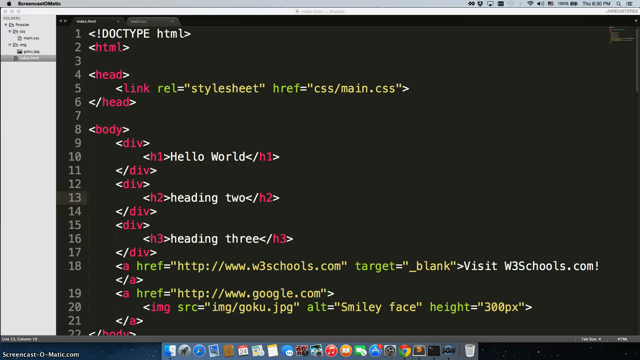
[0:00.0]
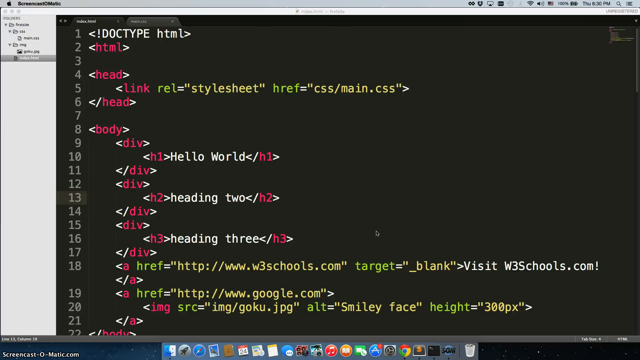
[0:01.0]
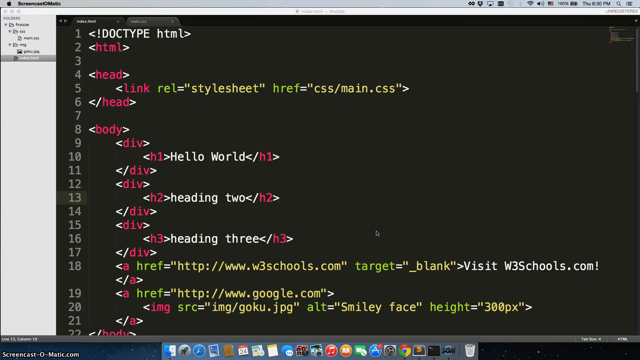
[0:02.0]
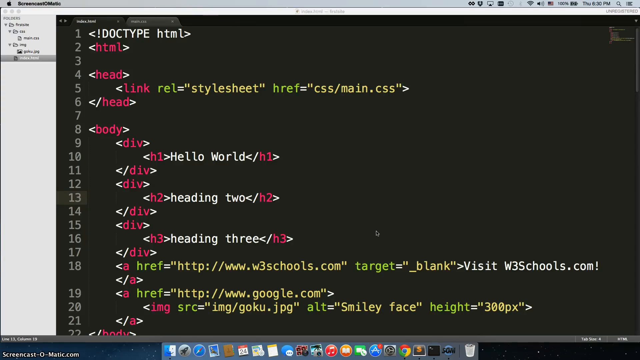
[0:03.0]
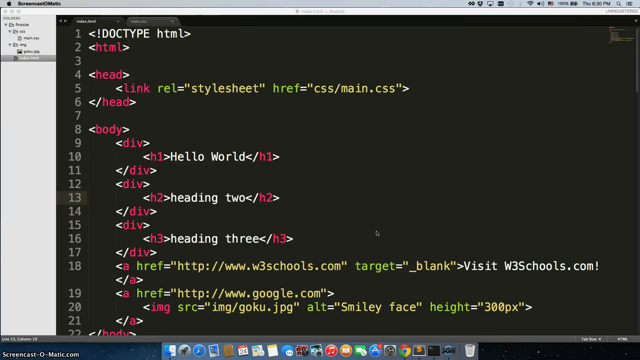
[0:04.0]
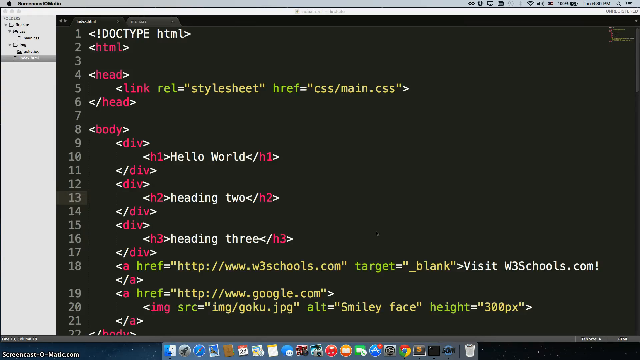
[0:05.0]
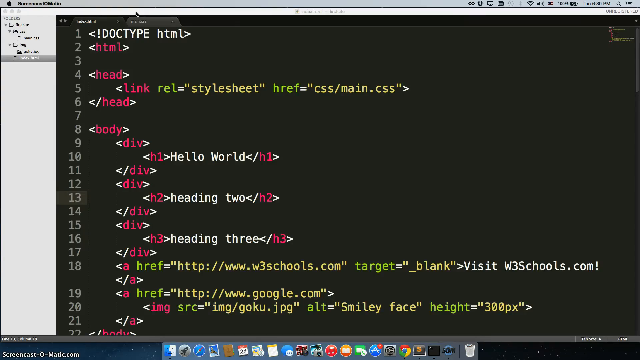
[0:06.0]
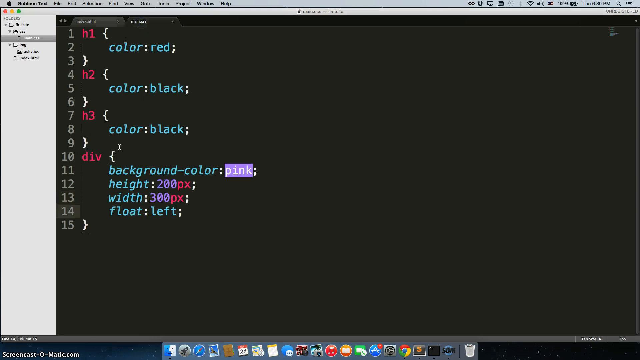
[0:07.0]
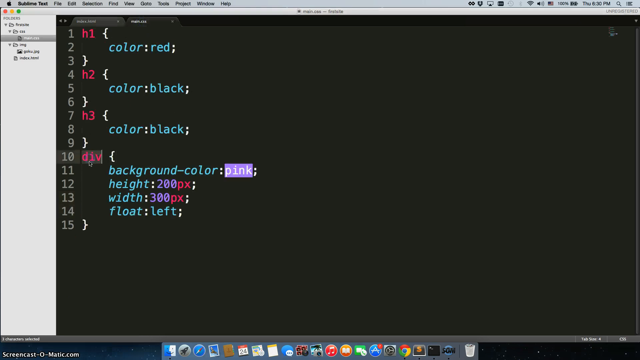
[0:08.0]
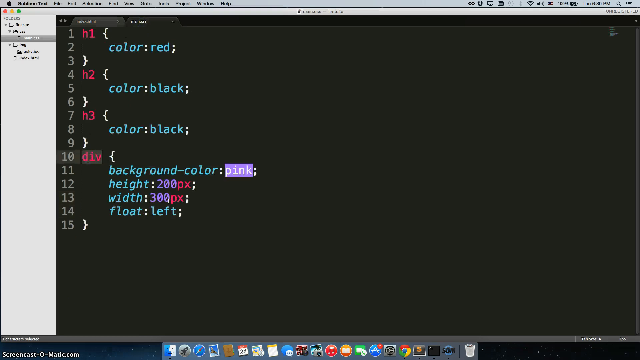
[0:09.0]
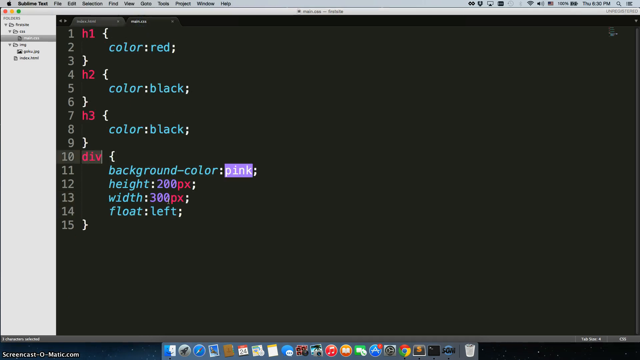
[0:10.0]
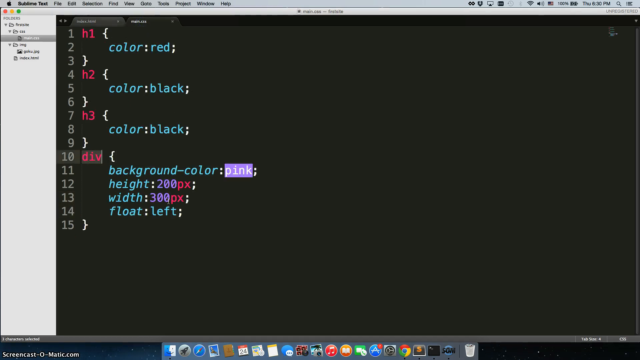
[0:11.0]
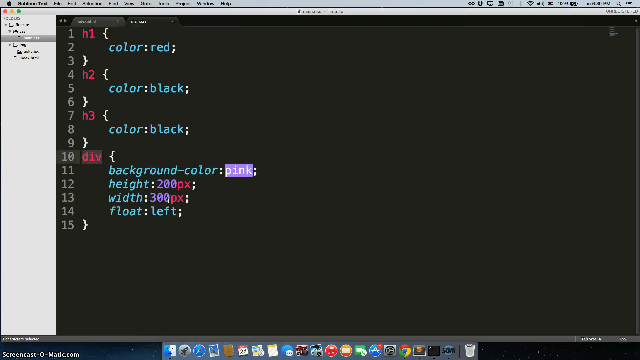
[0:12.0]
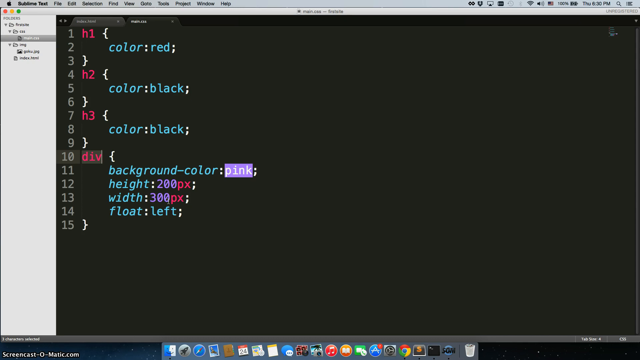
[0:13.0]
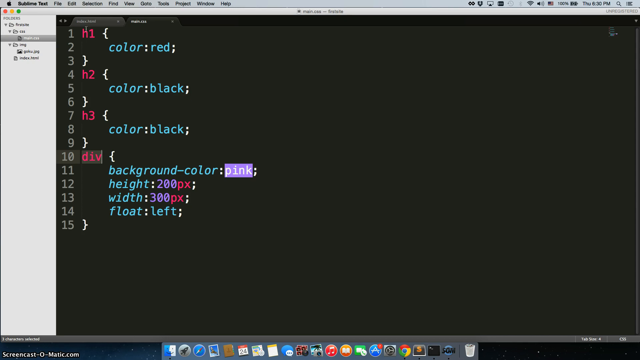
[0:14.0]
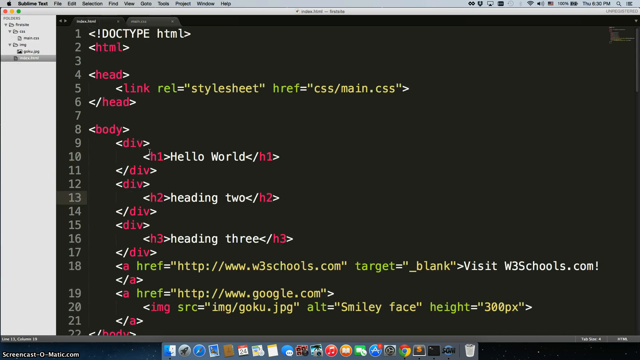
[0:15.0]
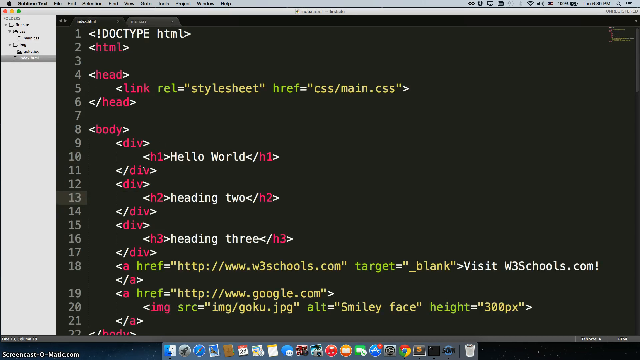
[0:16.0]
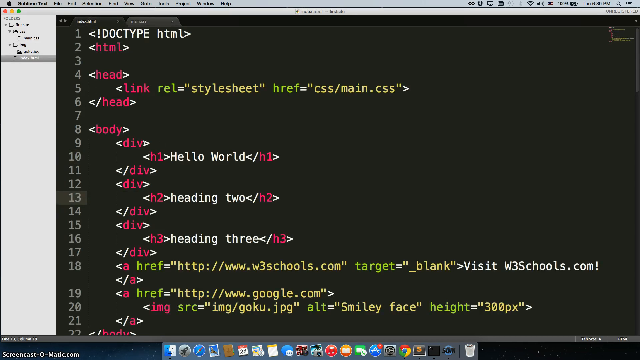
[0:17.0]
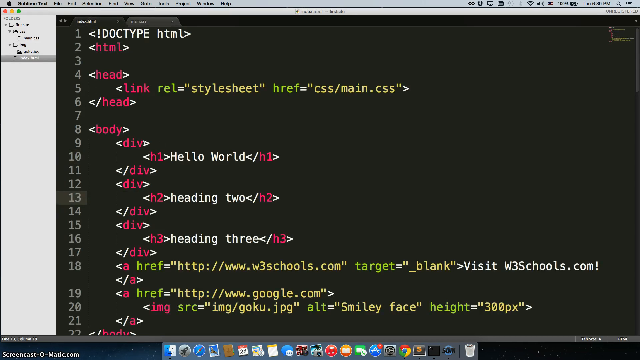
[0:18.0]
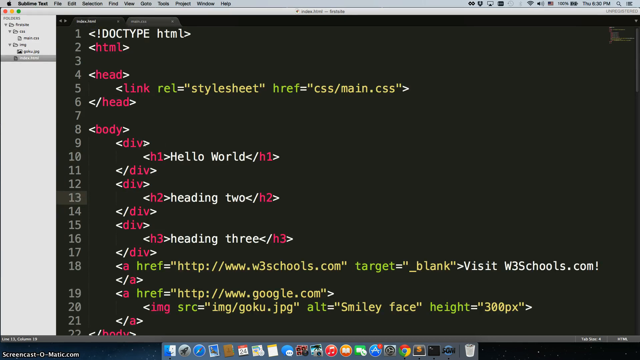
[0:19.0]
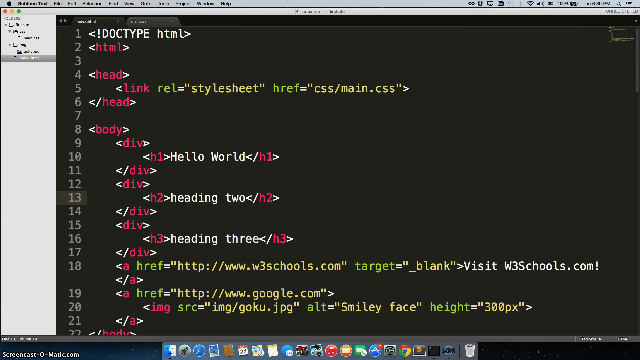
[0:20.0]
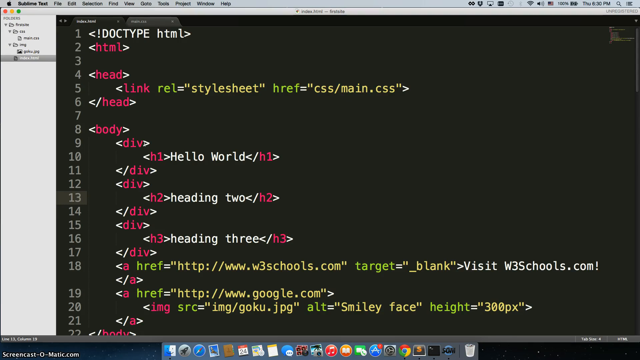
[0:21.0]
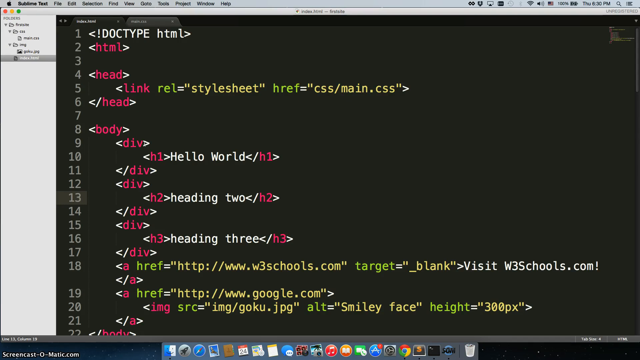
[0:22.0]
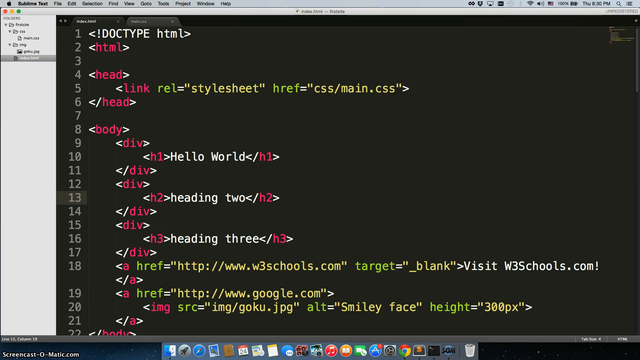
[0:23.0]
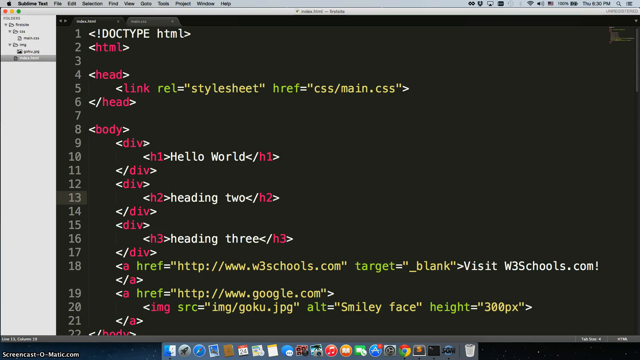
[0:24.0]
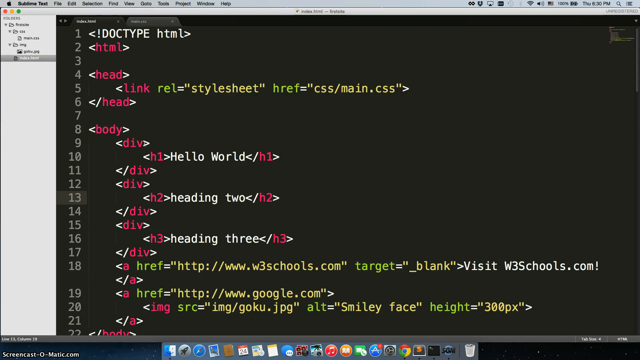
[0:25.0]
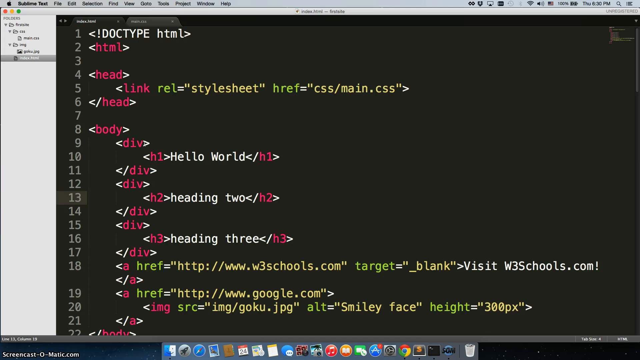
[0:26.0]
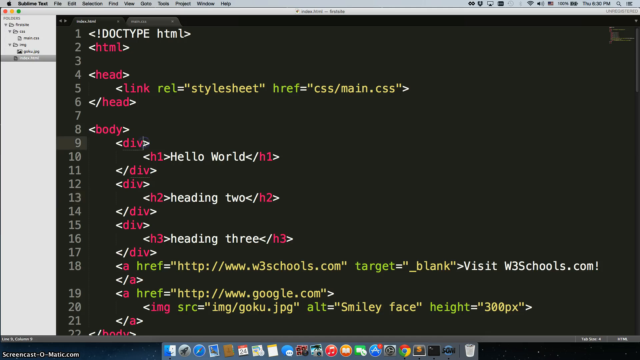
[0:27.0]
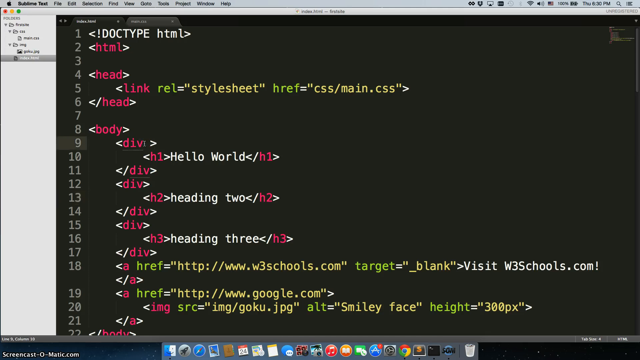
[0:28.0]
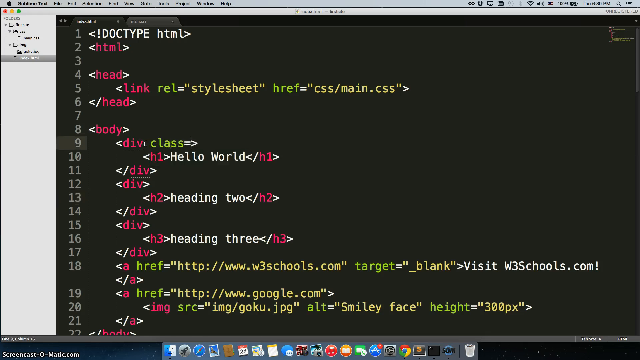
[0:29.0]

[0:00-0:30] A coding window appears on the desktop. It has a sidebar that navigates to different options and several tabs along the top. Lots of code fills the coding box in different colours: some in white, some in red and some in yellow. The view then switches to another screen where the code appears in other colours, some in sea blue, some in red and some in purple, with the lines in numbered order, as if someone is coding something.